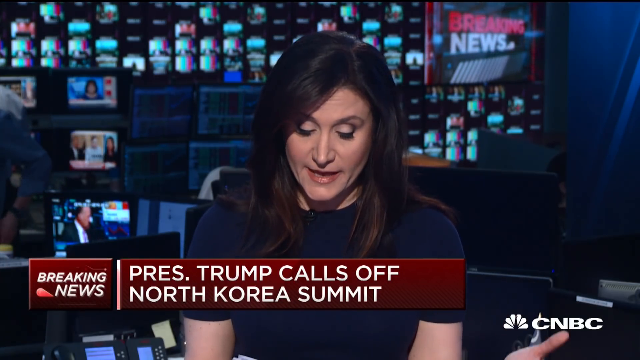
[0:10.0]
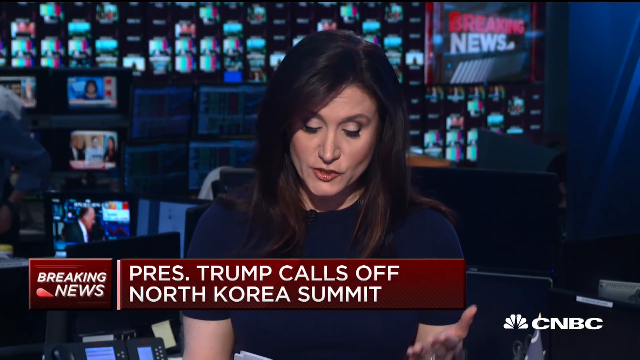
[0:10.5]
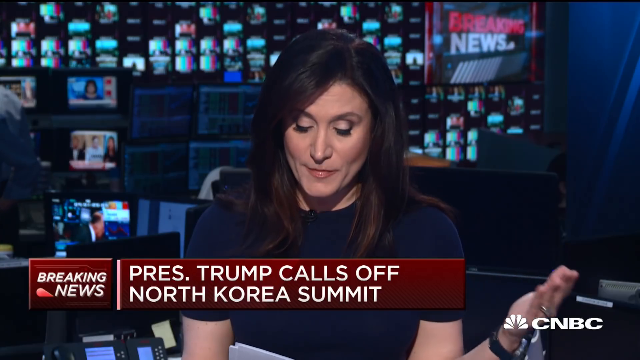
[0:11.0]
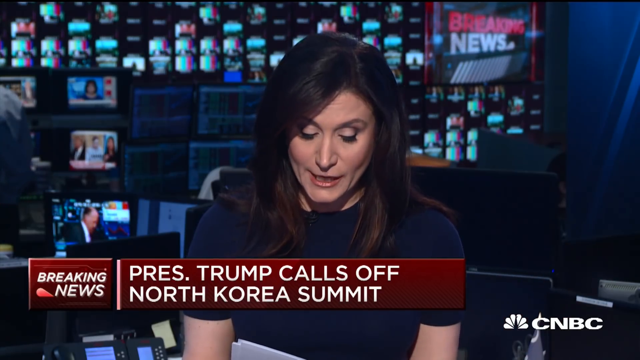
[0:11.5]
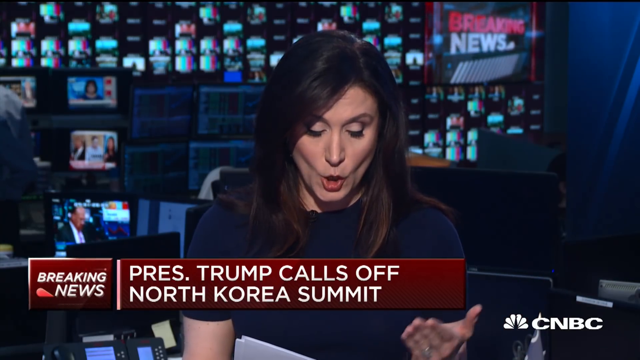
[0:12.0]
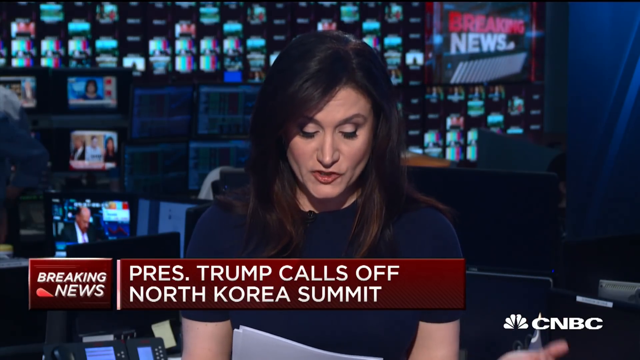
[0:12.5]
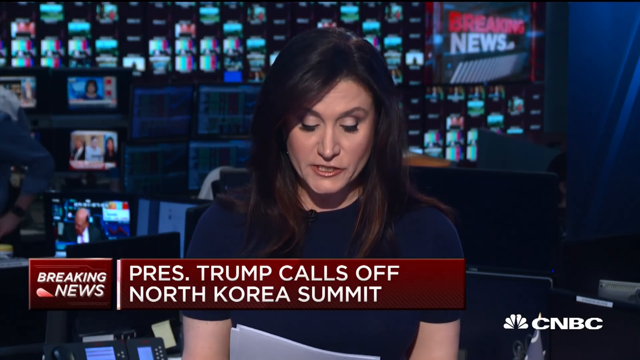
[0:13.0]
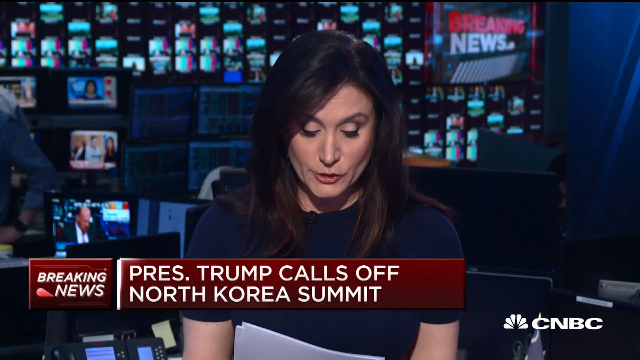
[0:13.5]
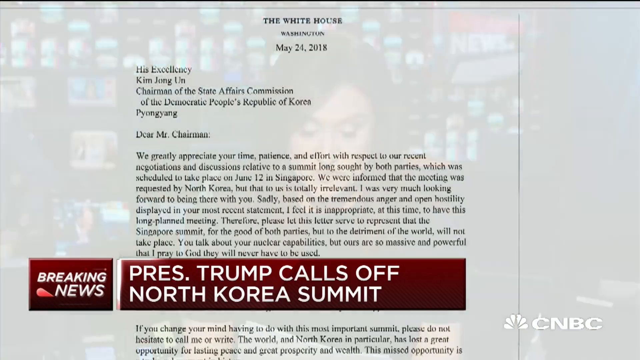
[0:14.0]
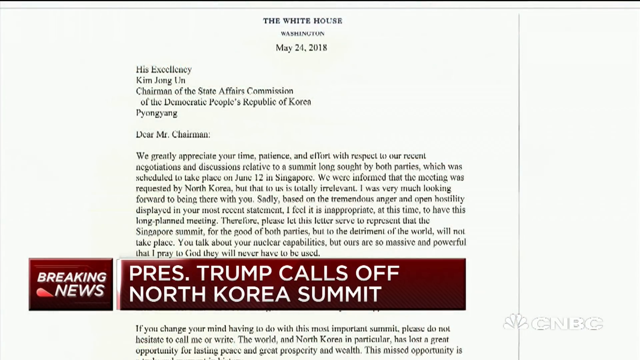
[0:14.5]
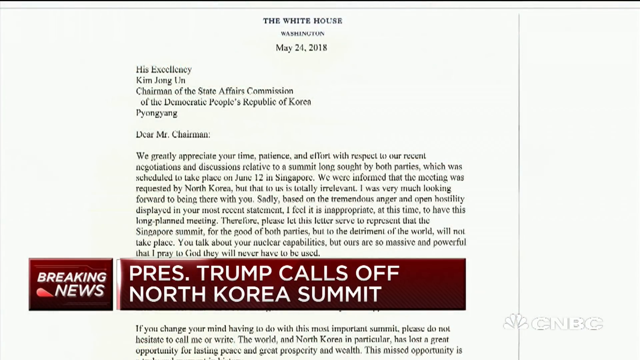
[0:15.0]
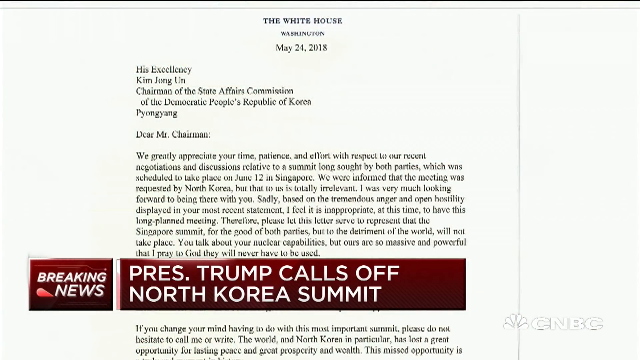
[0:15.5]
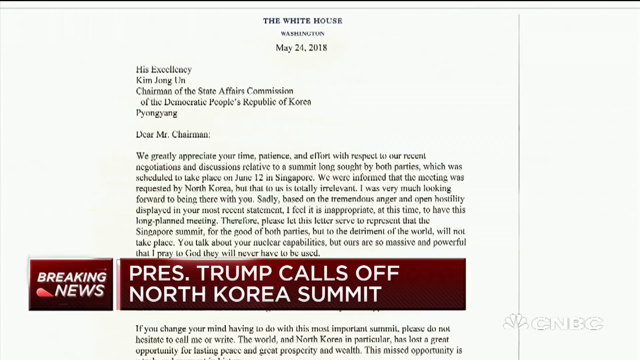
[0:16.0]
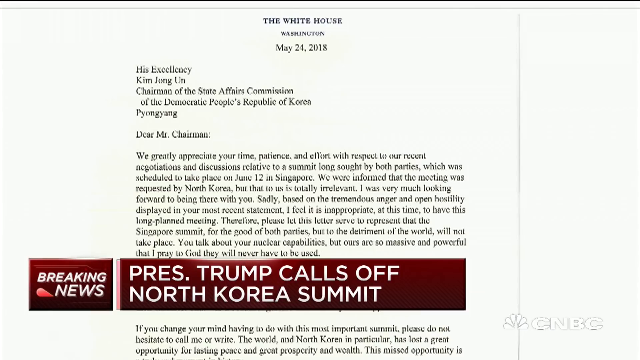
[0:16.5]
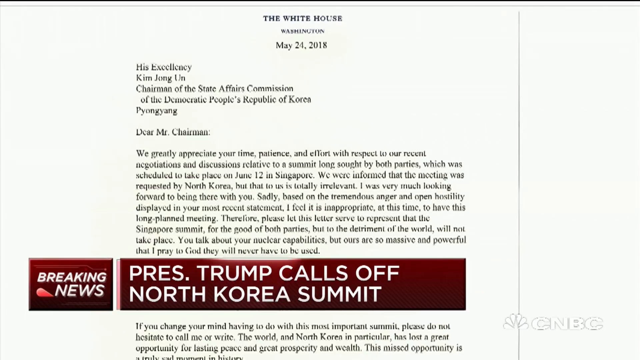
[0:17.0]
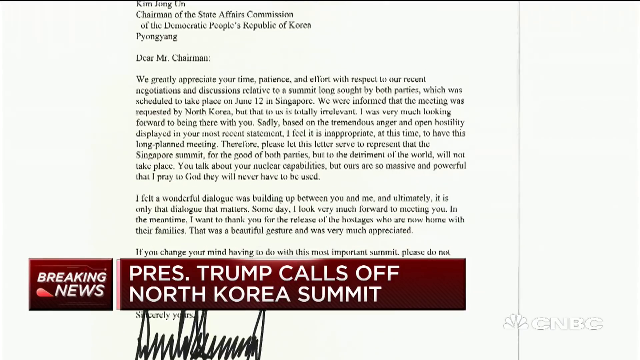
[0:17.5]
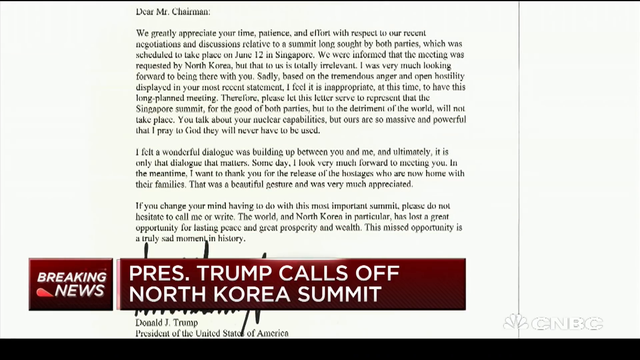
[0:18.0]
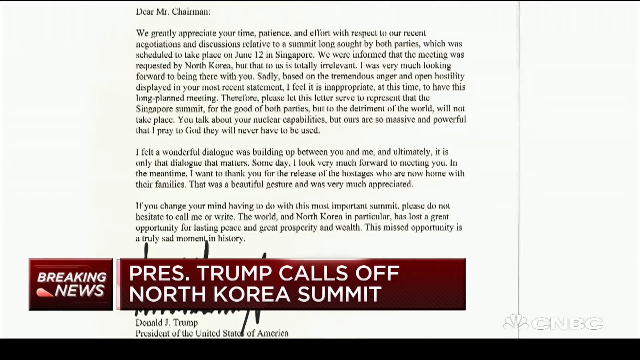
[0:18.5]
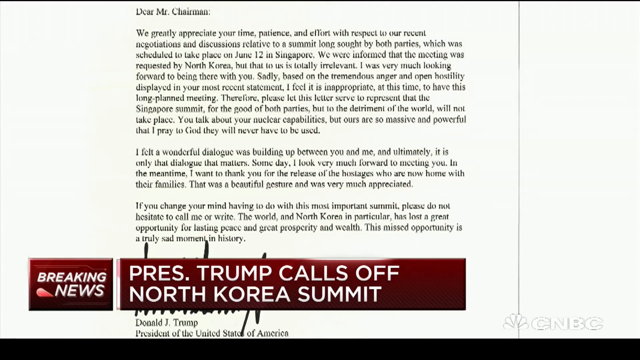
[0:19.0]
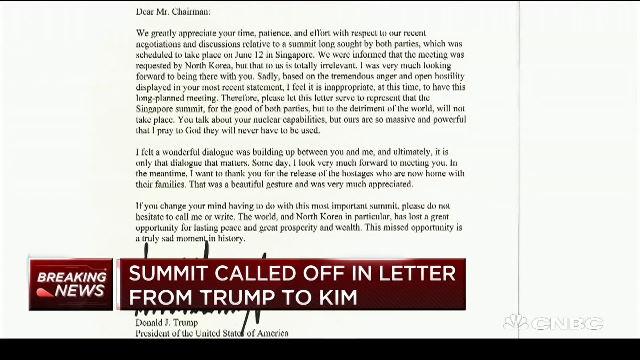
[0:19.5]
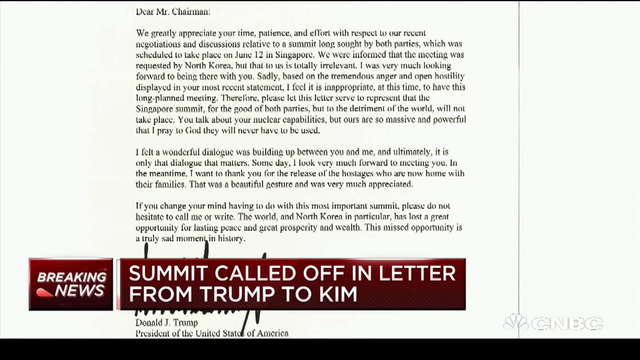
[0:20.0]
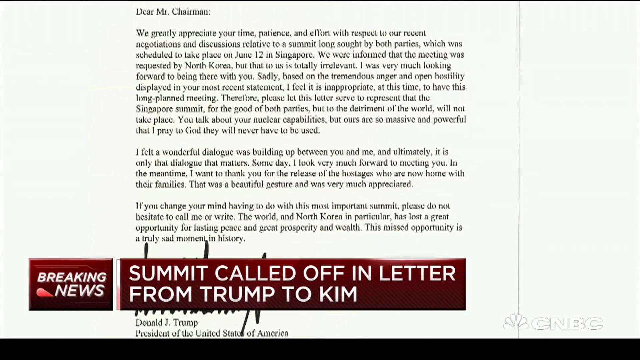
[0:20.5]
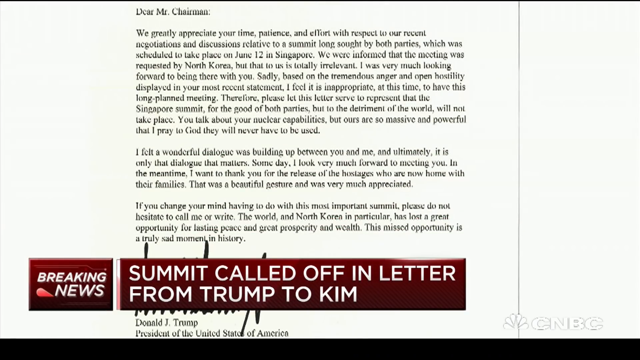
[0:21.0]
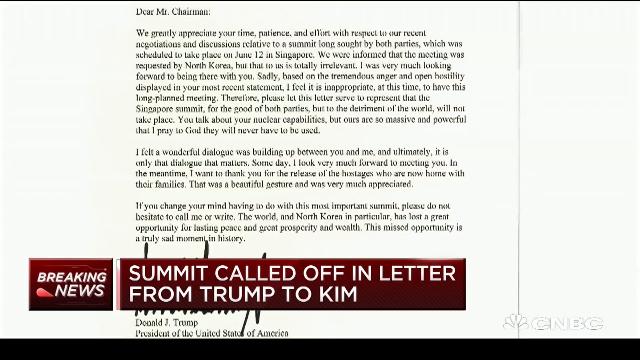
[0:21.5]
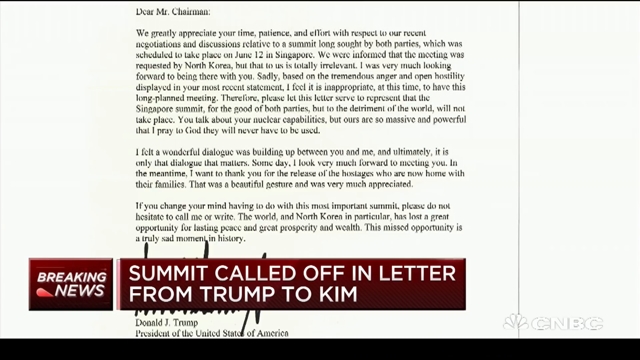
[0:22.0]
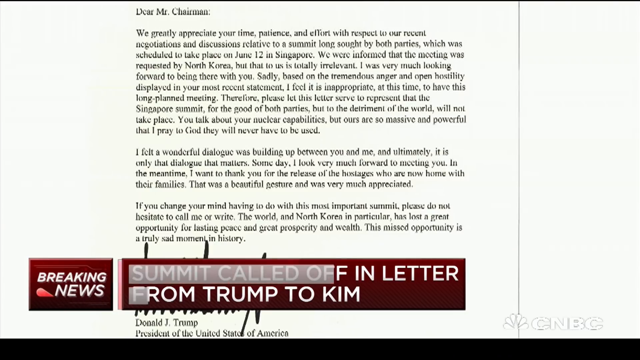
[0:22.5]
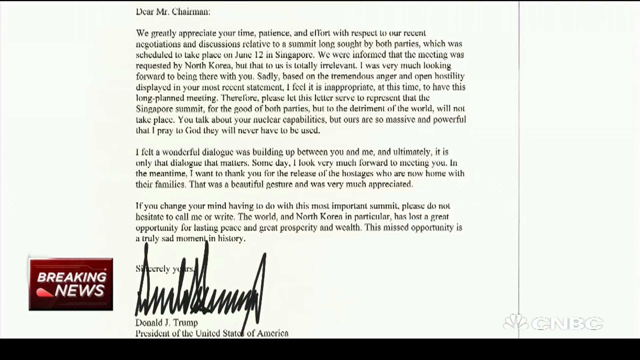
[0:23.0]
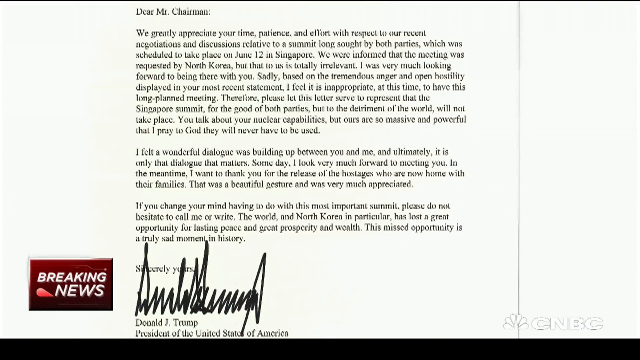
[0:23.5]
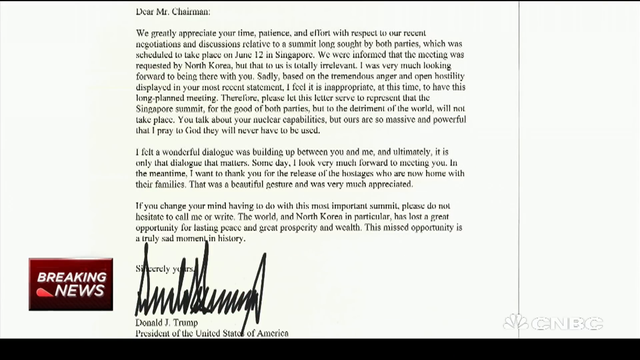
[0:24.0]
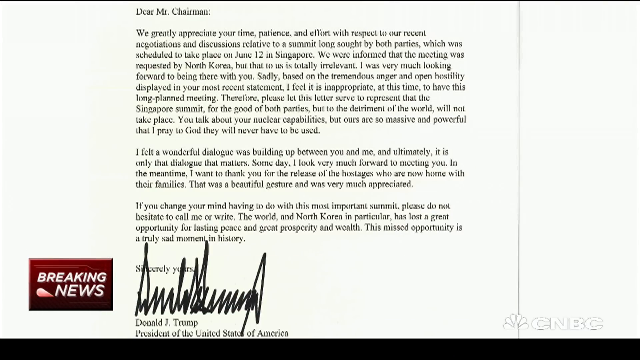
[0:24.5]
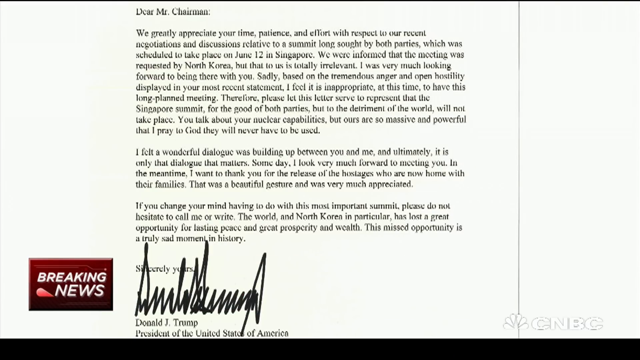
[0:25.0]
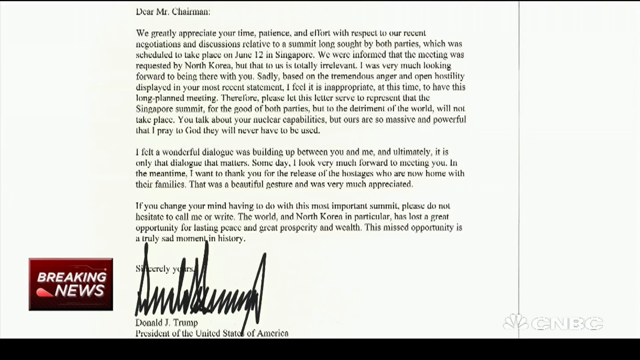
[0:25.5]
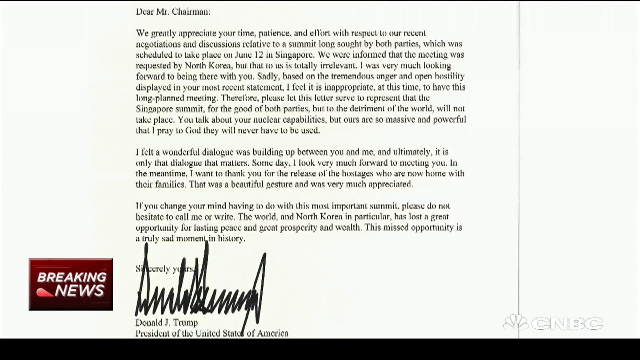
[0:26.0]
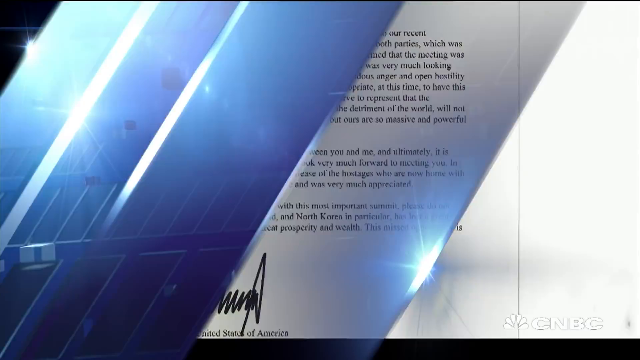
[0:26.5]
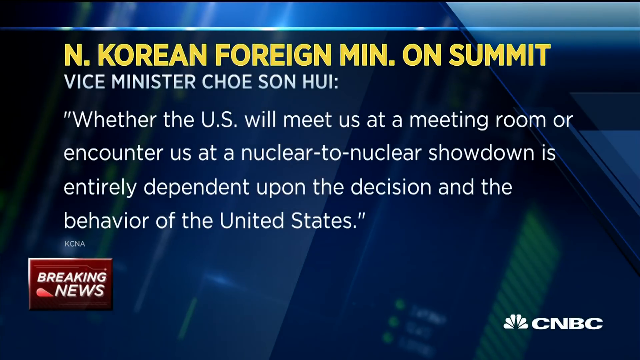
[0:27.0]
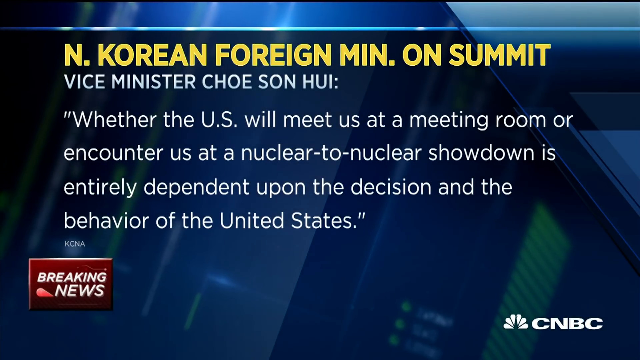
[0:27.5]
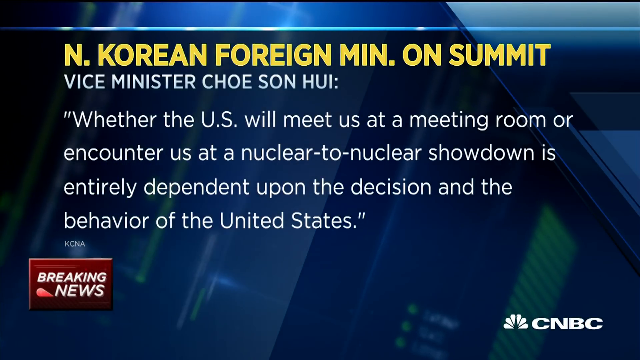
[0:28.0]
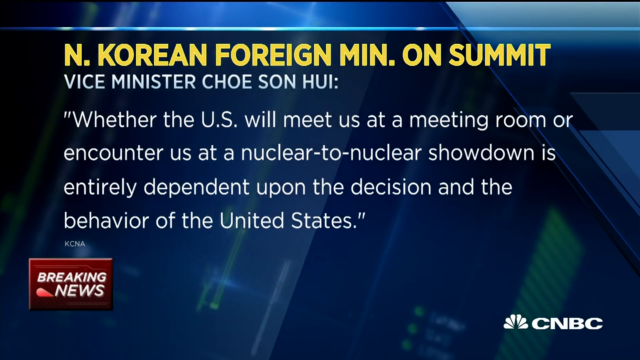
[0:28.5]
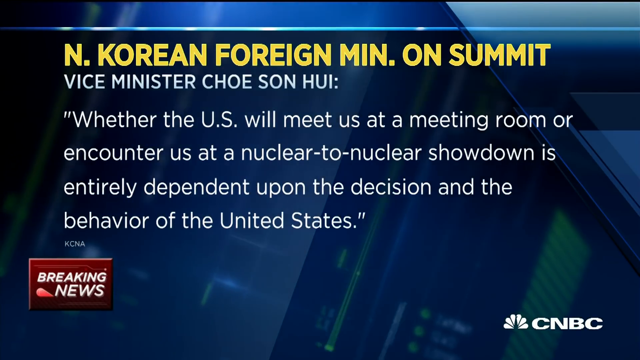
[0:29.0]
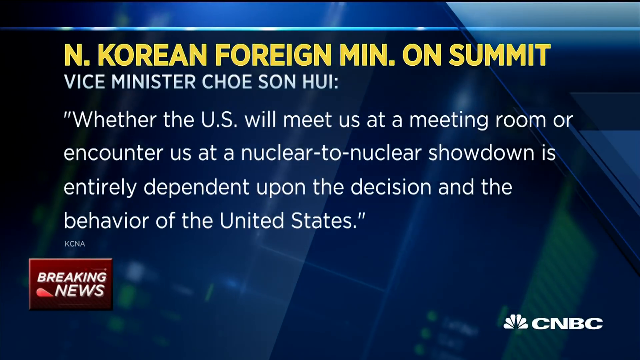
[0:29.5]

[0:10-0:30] The same CNBC reporter reads a statement from the White House, which appears on screen. The statement is dated May 24, 2018, and reads: "Dear Madam Chairman, We greatly appreciate your time, patience, and effort with respect to our recent negotiations and discussions related to the summit, which was scheduled to take place on June 12 in Singapore. We are informed that the meeting was requested by North Korea, but that, to us, is totally irrelevant." It continues: "We were most looking forward to being here with you. Sadly, based on tremendous anger and open hostility displayed in your most recent statement, I feel it is inappropriate at this time to have this long-planned meeting." A statement from the North Korean foreign minister is also shown; it ends with the words "is entirely dependent upon the decision and the behavior of the United States of America."